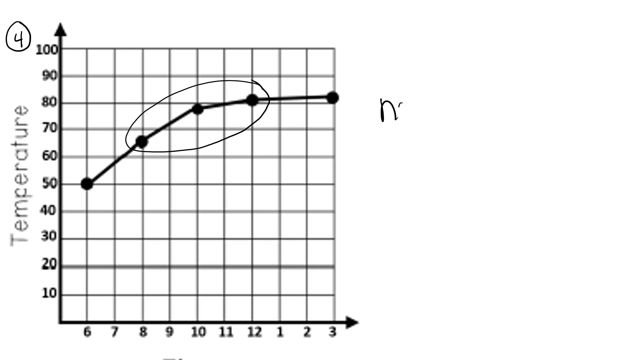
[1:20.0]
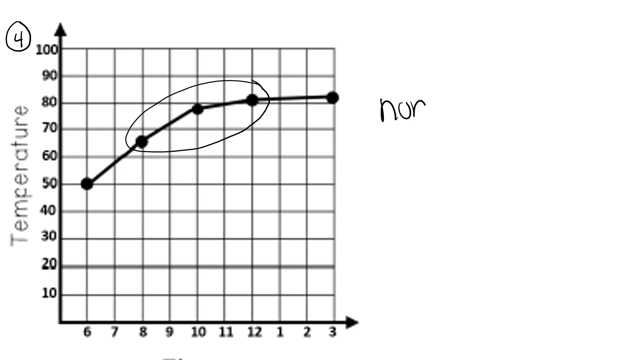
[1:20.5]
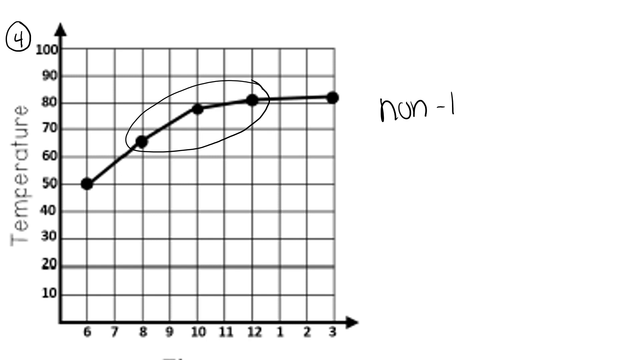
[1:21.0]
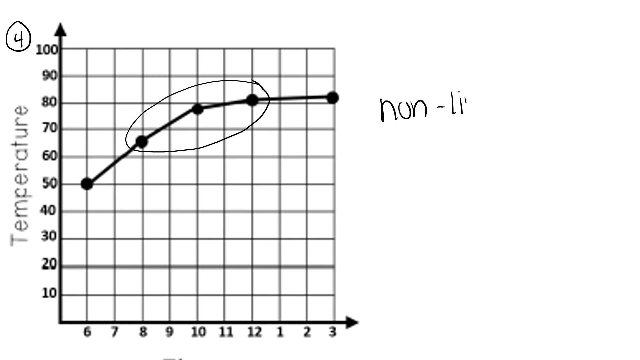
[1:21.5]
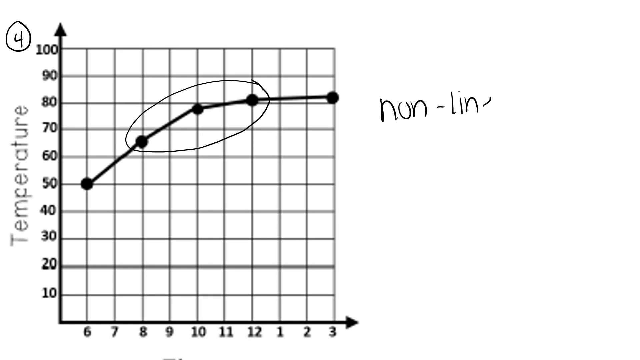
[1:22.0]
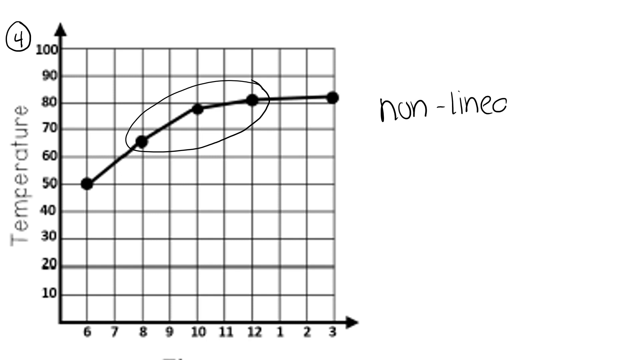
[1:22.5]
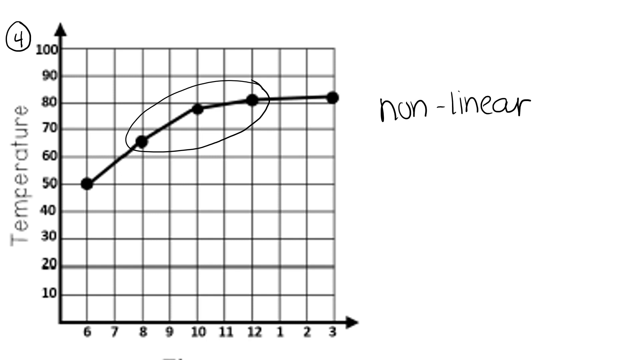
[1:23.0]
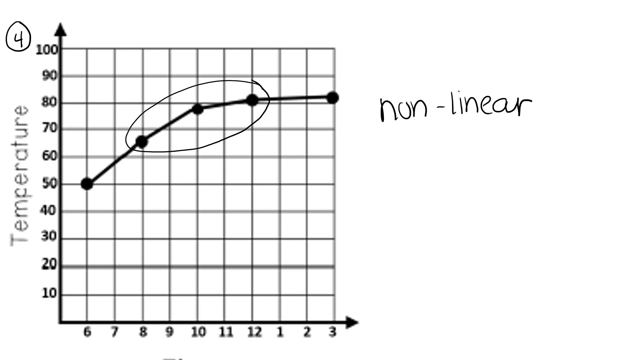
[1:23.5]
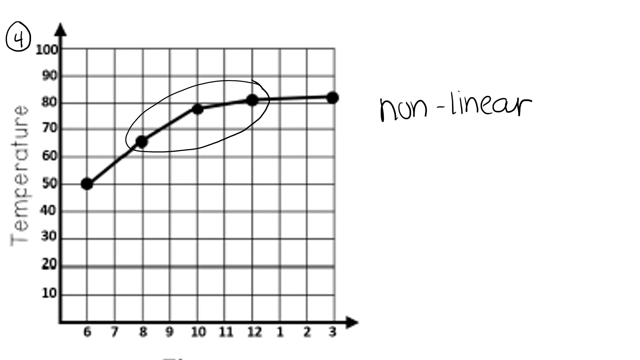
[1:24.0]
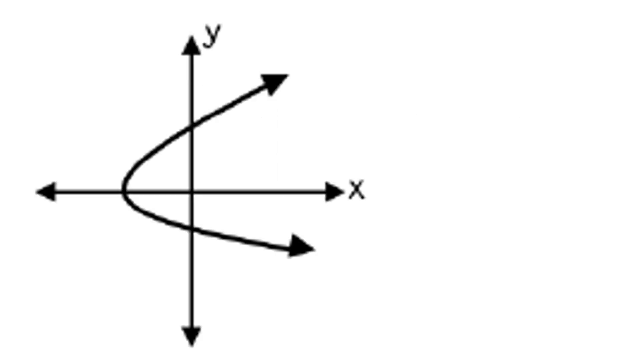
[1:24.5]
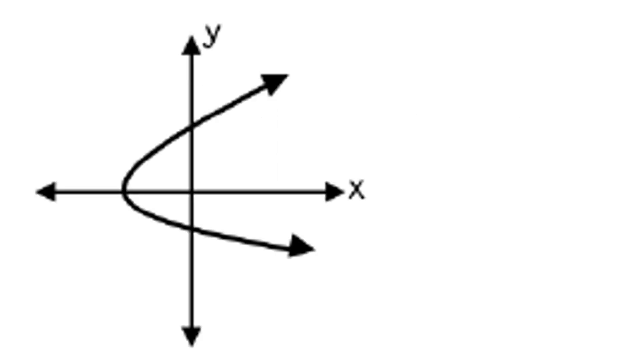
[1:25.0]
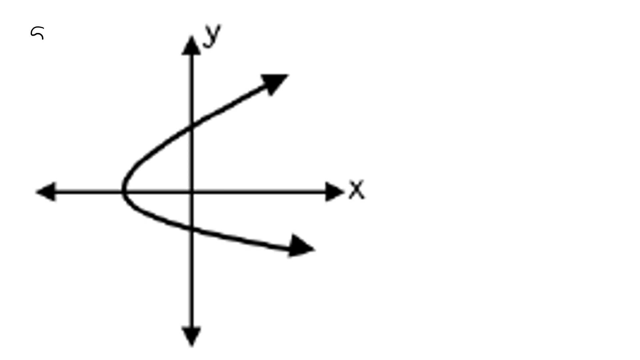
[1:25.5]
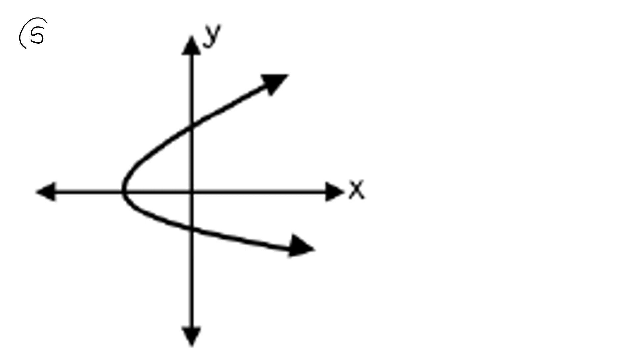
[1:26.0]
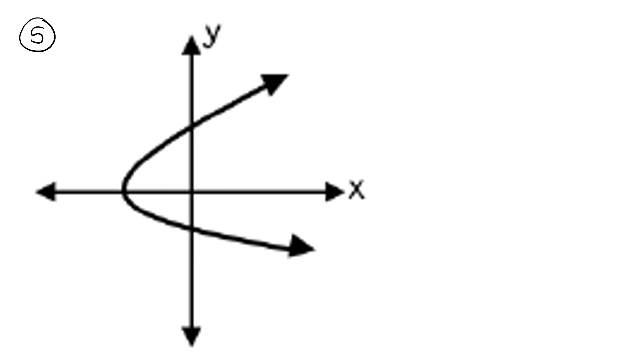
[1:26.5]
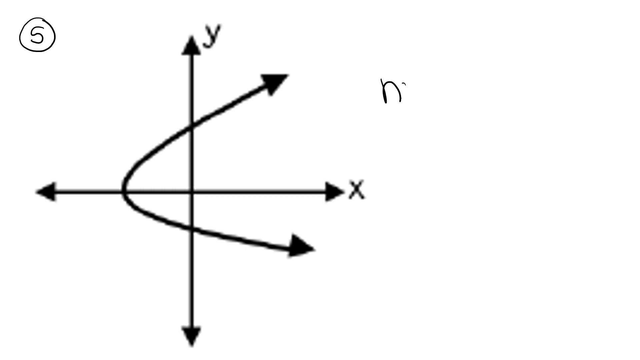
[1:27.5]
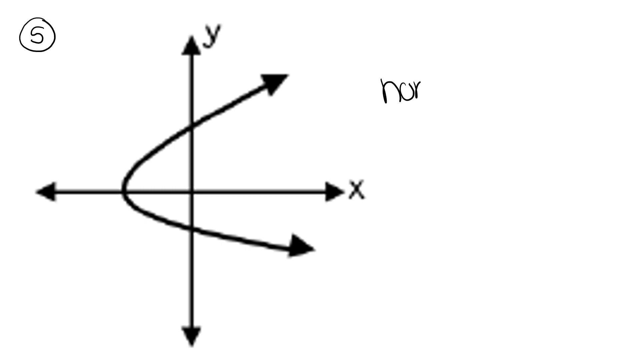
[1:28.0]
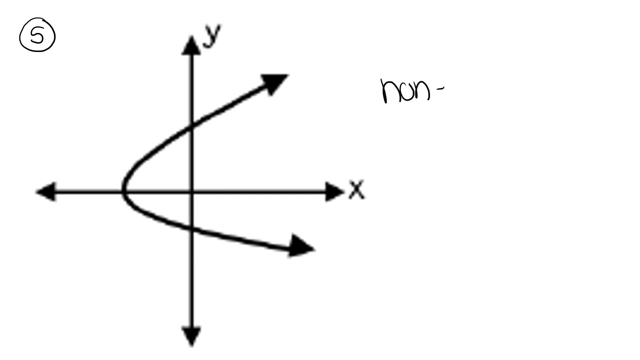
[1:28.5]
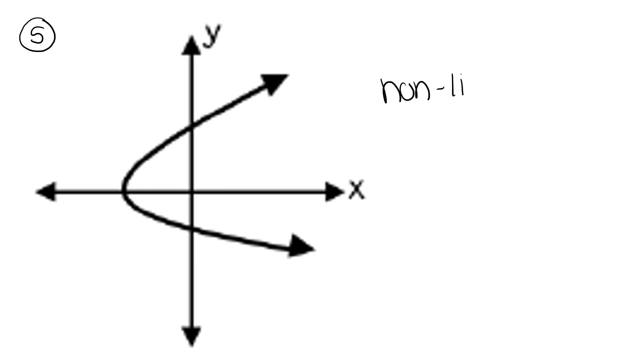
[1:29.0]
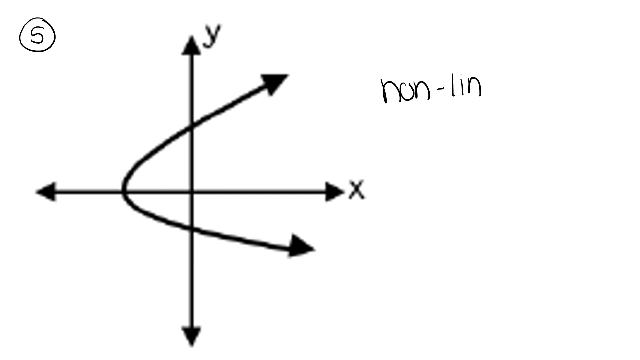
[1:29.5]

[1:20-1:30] A graph numbered four, according to the number written at the top left, is shown. The word "temperature" is written at the top left. The y-axis has values from 10 to 100, and the x-axis has the numbers 6, 7, 8, 9, 10, 11, 12, 1, 2, 3. Points are plotted: one between 50 and 6, one between 65 and 8, one between 79 and 10, one at 81 and 12, and the last between 83 and 3. After the dots are joined with one line, the graph is circled; the line makes something like a curve. The word "nonlinear" is written at the top right.